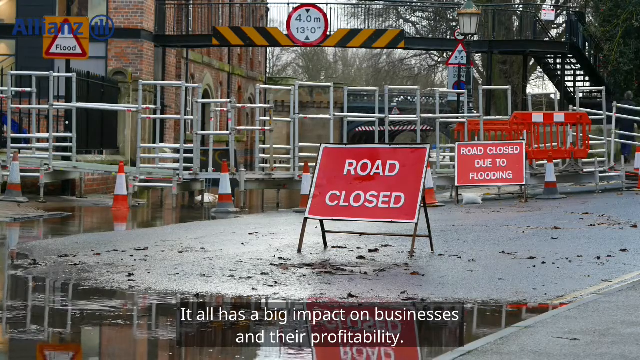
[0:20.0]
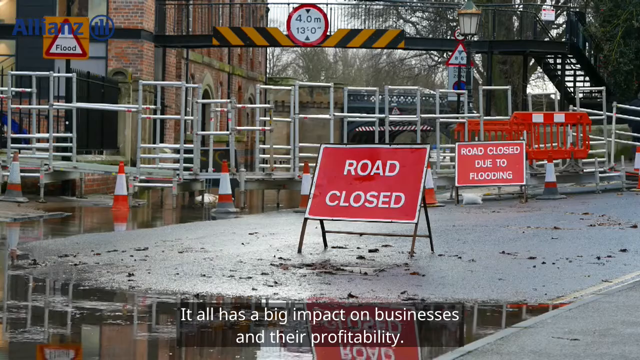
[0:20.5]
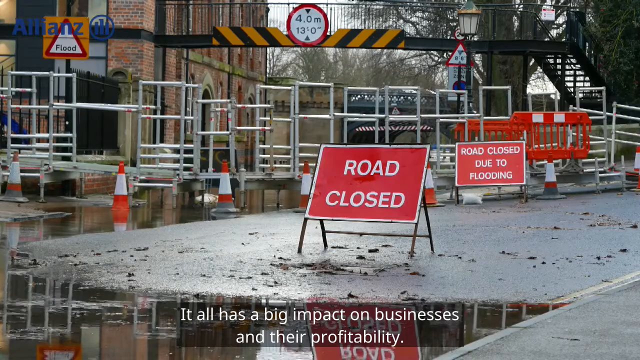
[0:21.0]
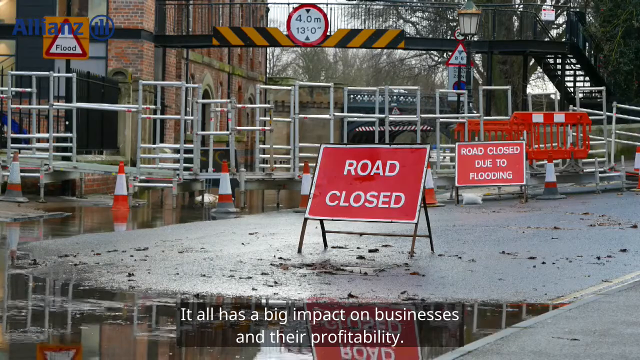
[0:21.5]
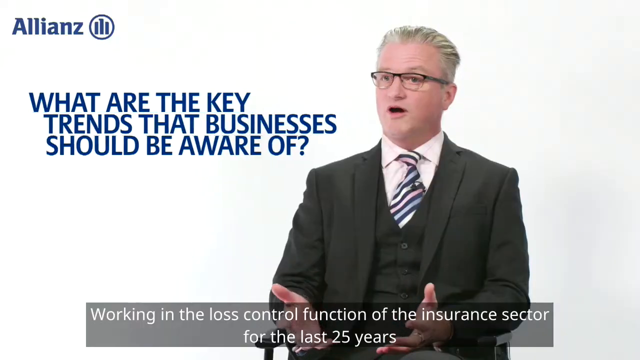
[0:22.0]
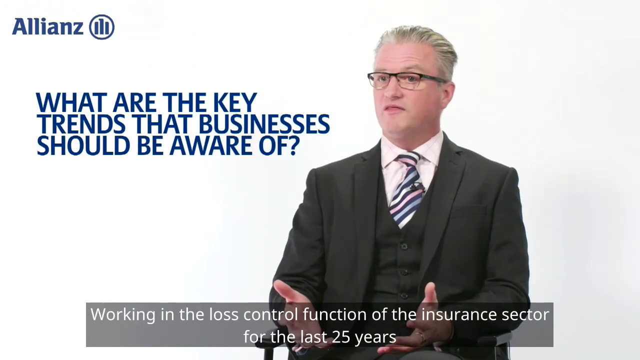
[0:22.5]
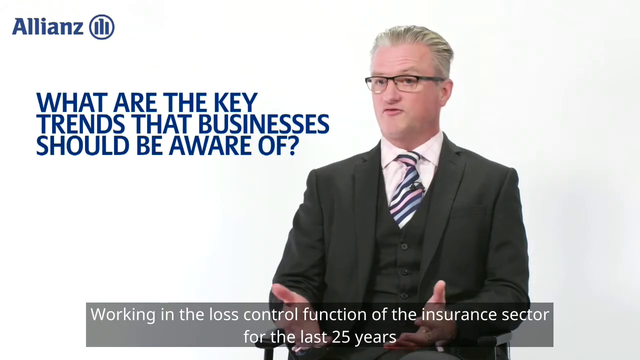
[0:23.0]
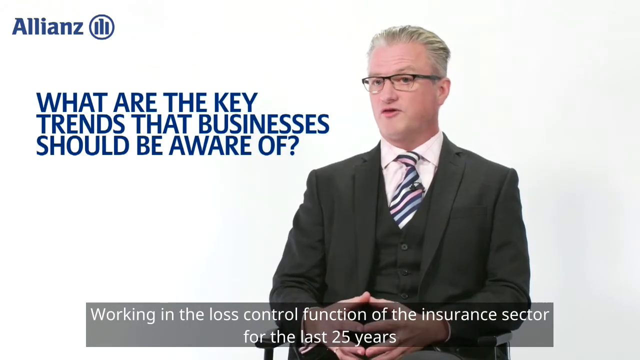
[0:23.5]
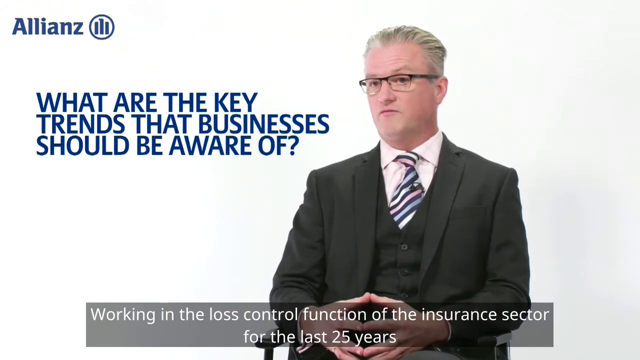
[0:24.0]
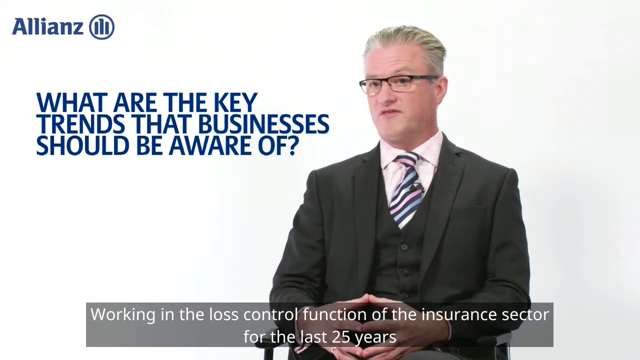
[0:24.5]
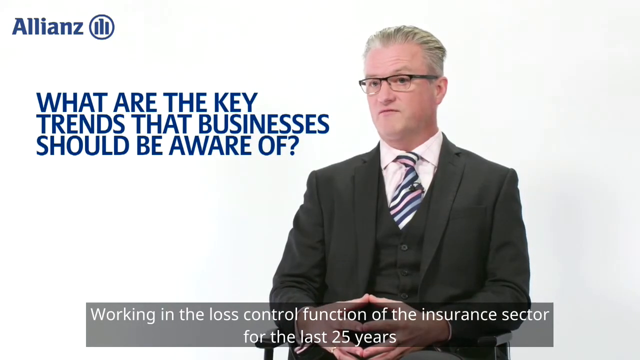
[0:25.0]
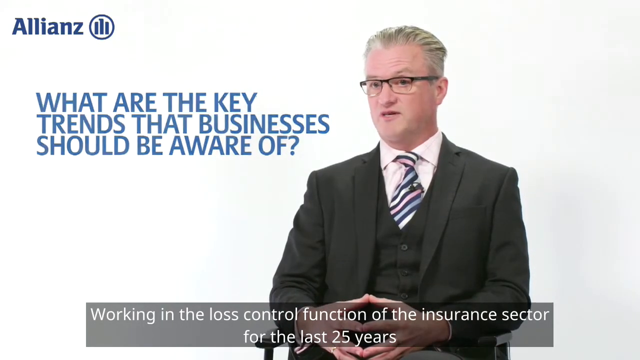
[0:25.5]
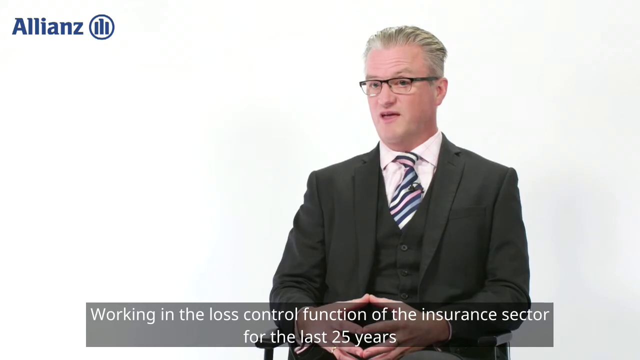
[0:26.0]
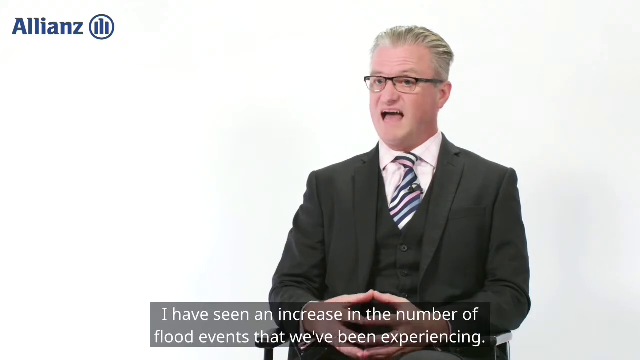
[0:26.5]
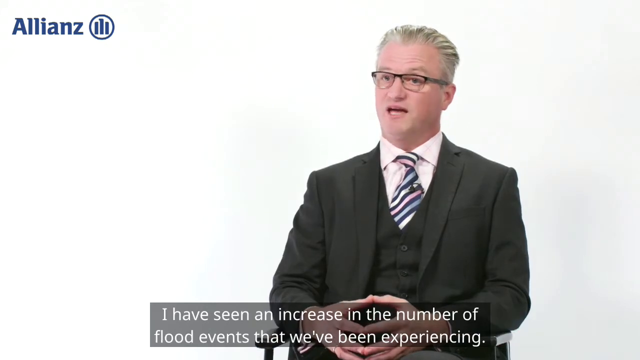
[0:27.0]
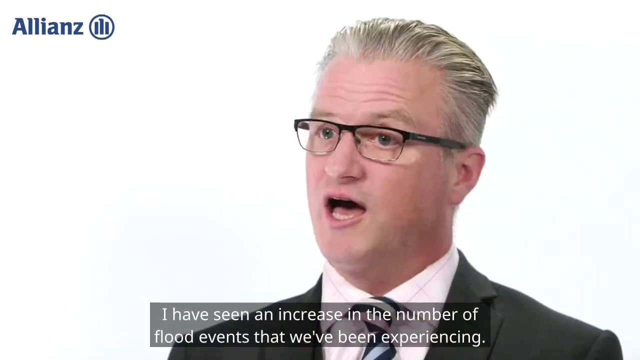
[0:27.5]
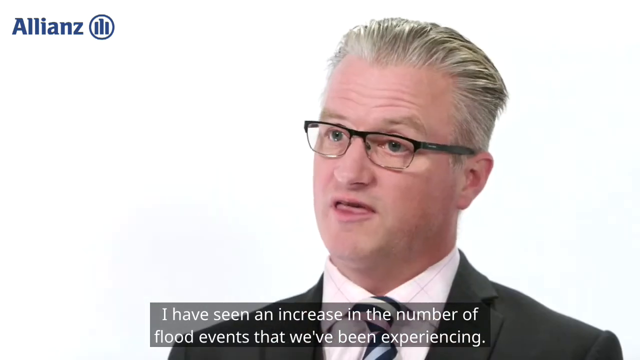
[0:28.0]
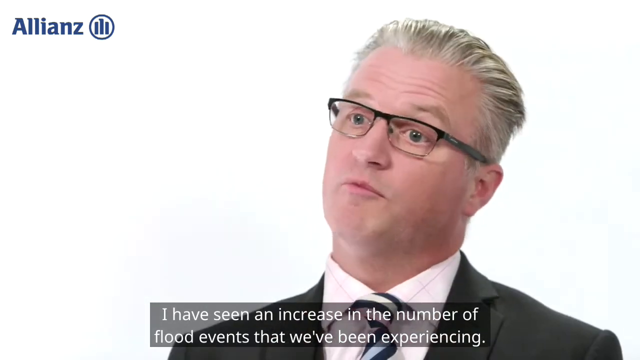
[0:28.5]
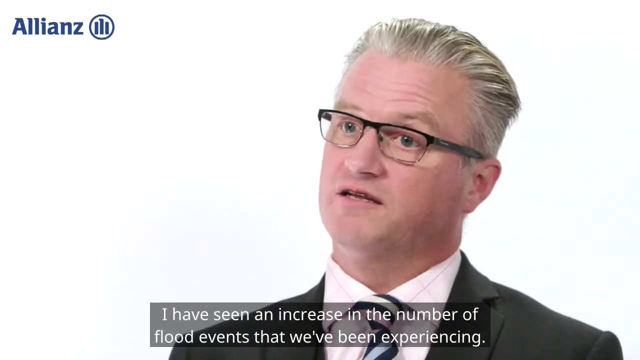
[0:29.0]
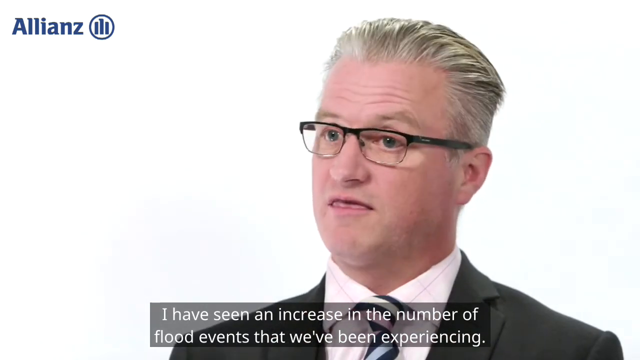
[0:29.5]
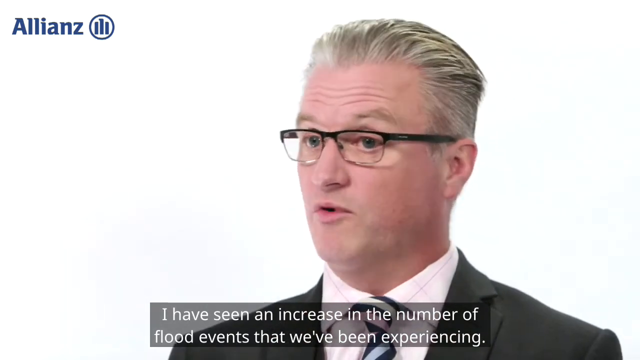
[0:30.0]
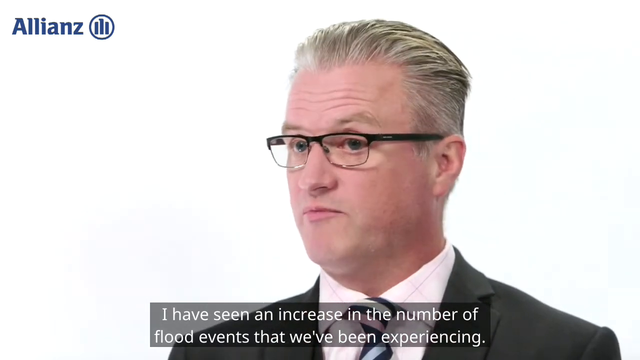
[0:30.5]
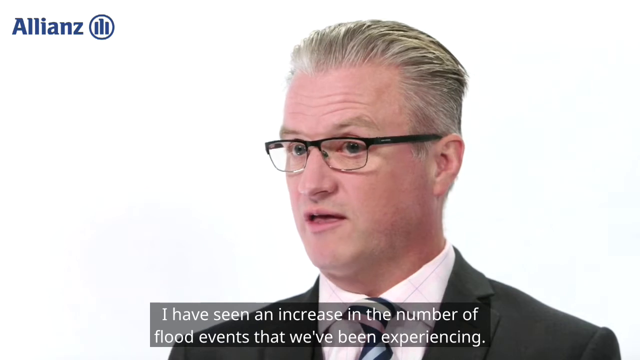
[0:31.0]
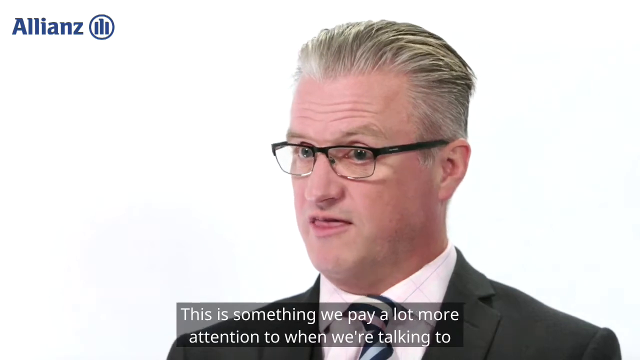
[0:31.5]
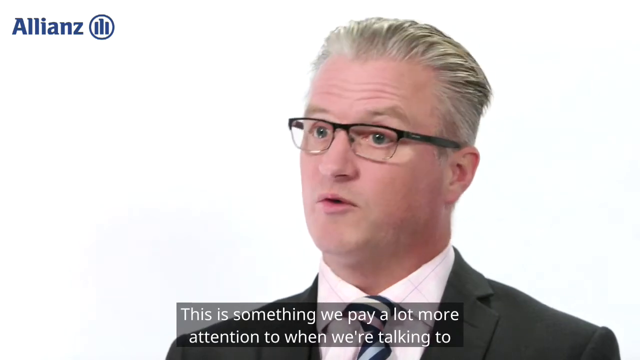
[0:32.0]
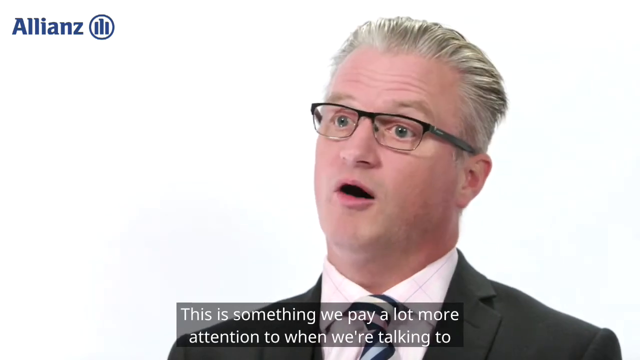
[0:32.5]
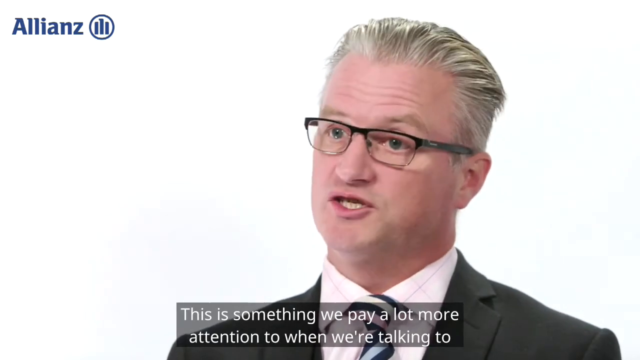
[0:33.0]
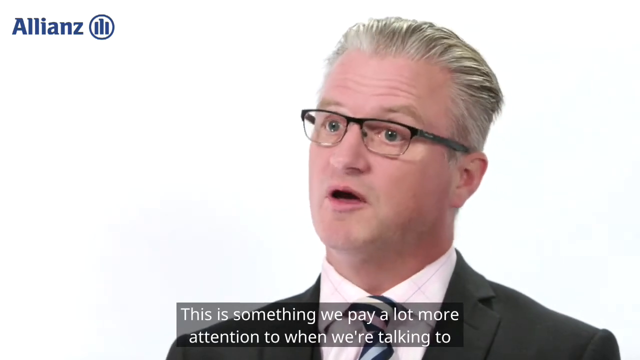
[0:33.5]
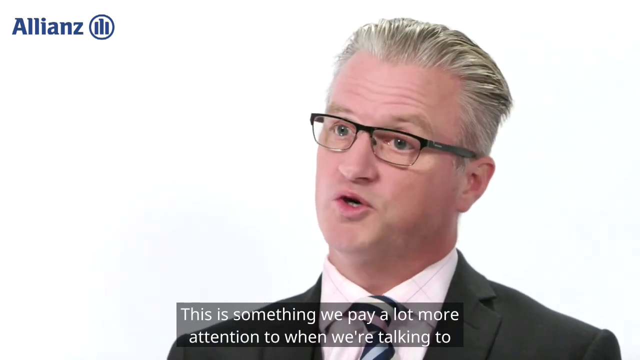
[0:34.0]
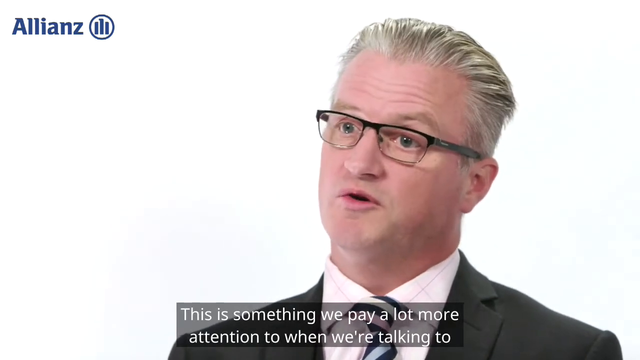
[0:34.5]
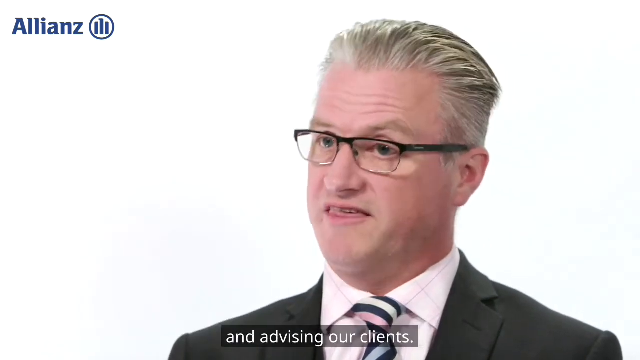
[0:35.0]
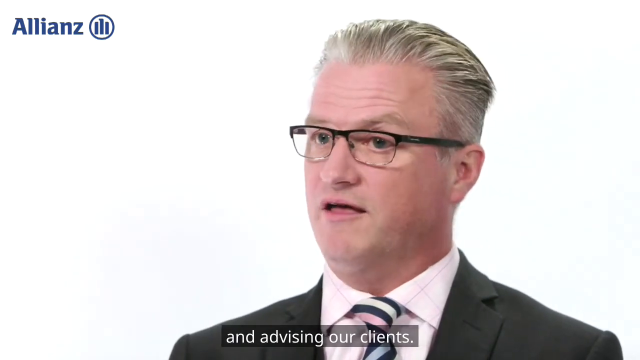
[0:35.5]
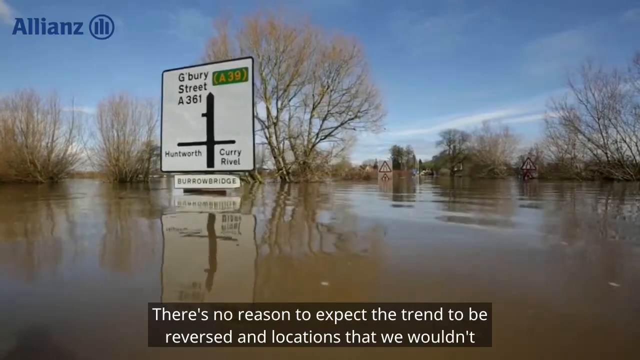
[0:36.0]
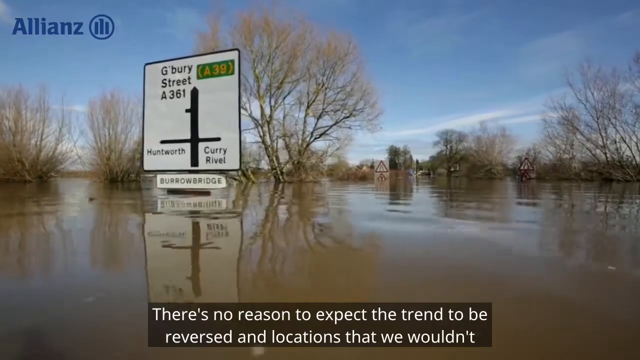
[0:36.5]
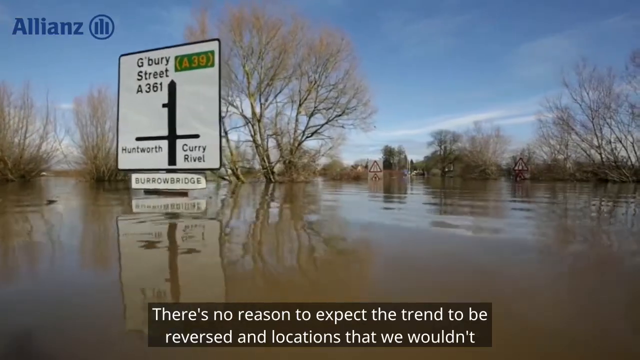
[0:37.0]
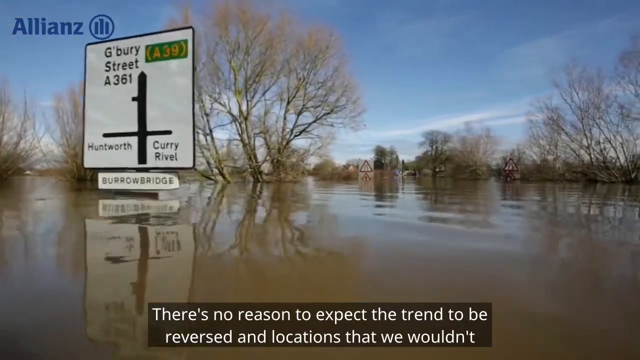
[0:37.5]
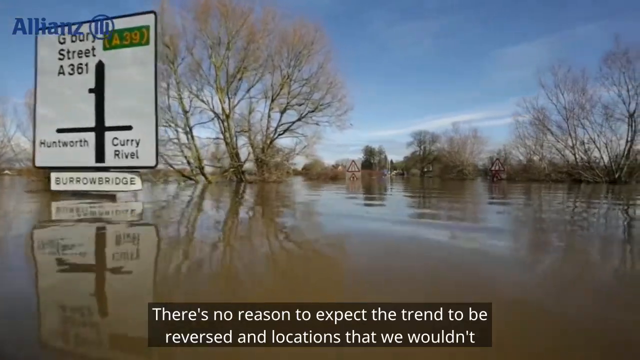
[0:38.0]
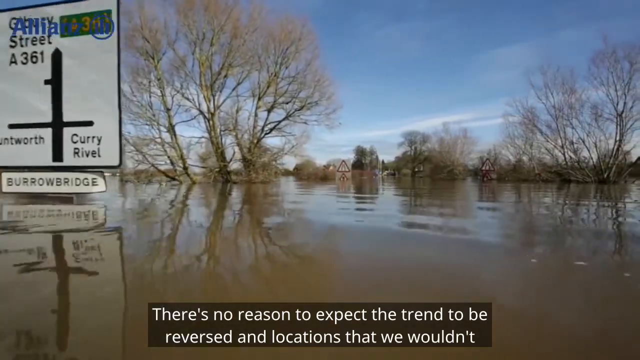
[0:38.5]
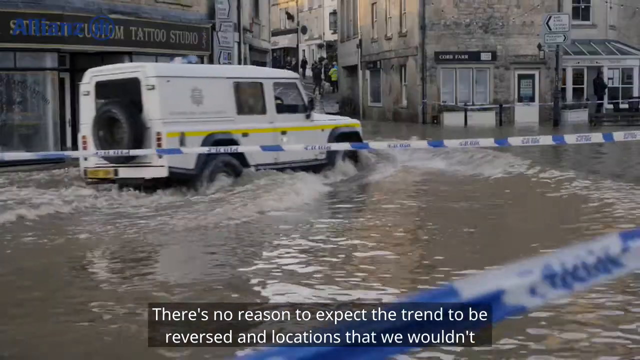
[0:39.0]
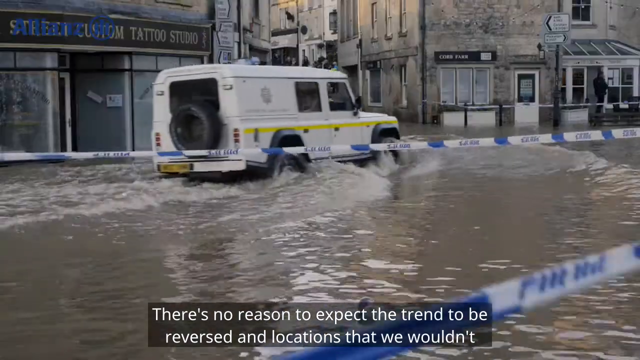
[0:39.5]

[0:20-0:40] Text reads "road closed, road closed due to flooding." In the upper right-hand corner is ALLINZ. Text continues: "it has a big impact on businesses and their profitability," "I have seen an increase in the number of flood events that we've been experiencing," and "This is something we pay a lot more attention to when we're talking to and advising our clients." The man is on the right side of the screen, and to his left a question in blue, all capital letters, across several lines reads "what are the key trends that businesses should be aware of?"